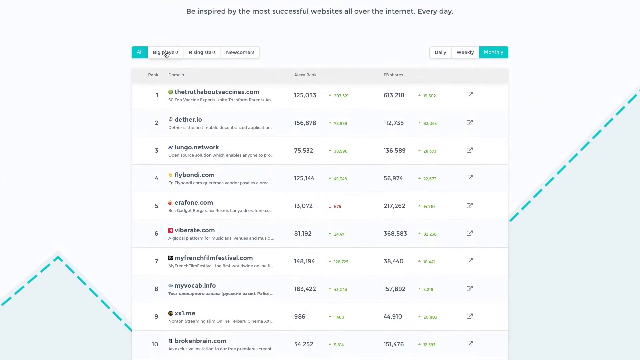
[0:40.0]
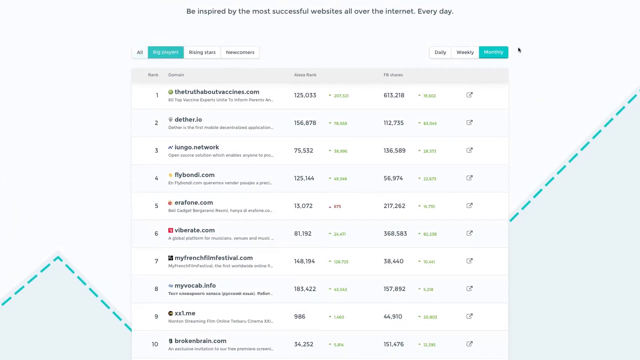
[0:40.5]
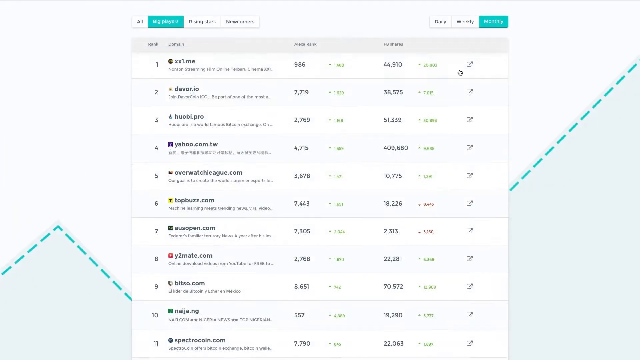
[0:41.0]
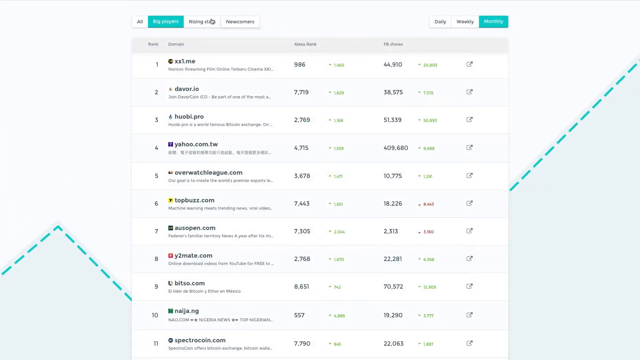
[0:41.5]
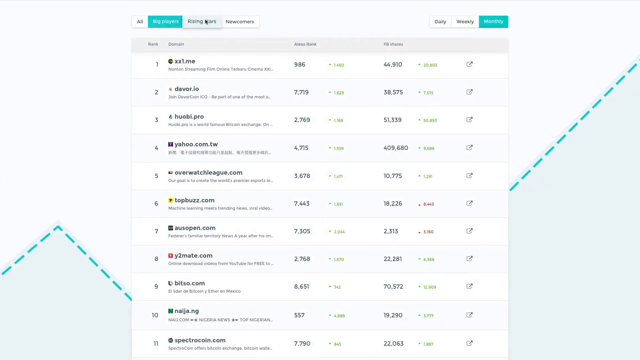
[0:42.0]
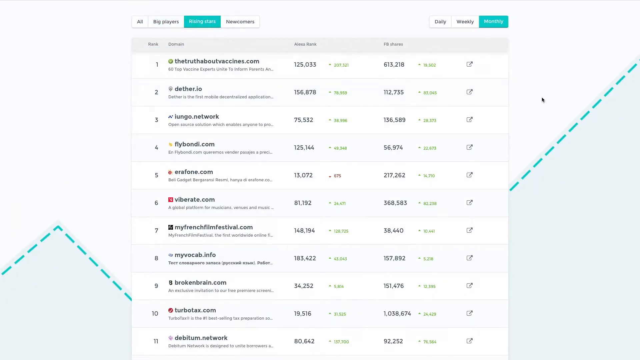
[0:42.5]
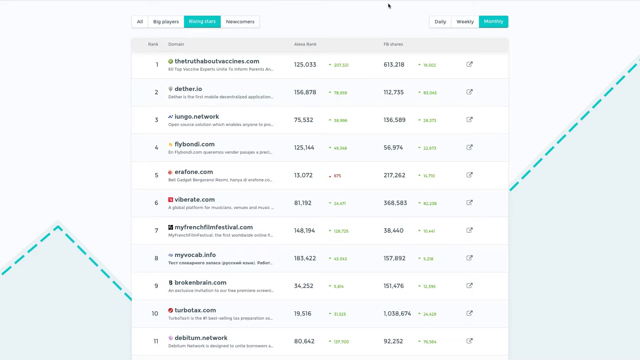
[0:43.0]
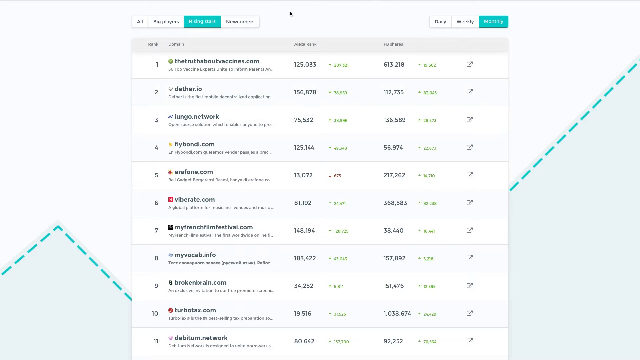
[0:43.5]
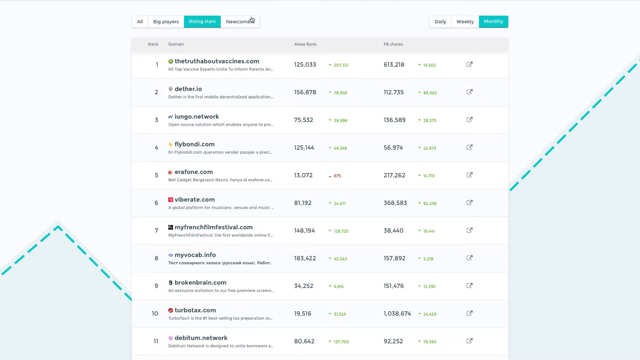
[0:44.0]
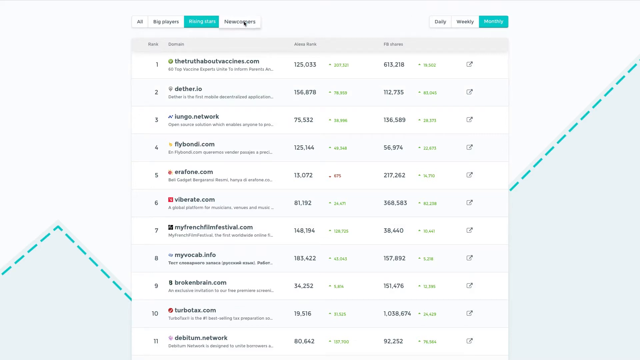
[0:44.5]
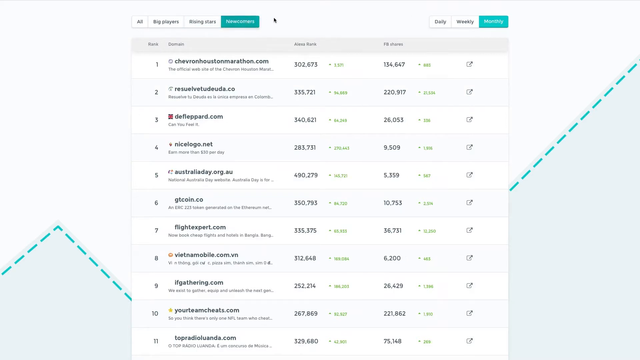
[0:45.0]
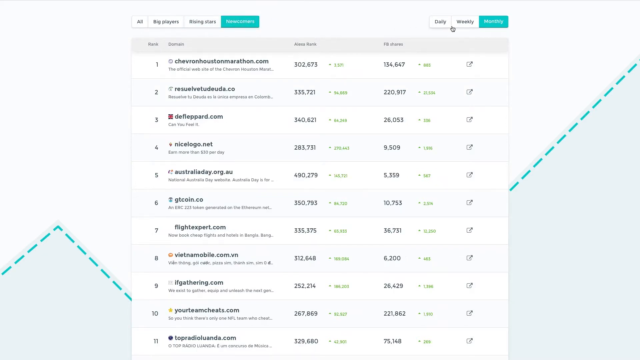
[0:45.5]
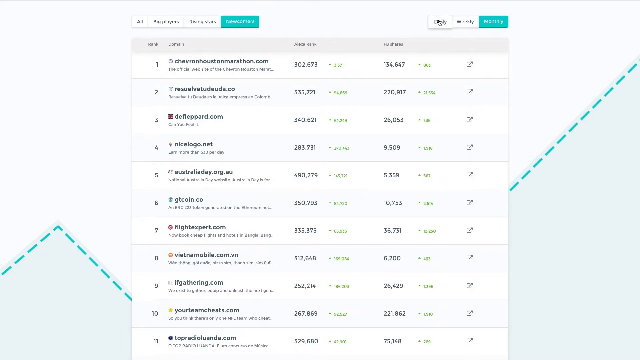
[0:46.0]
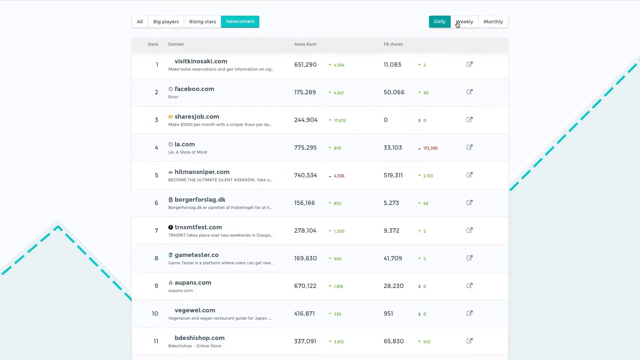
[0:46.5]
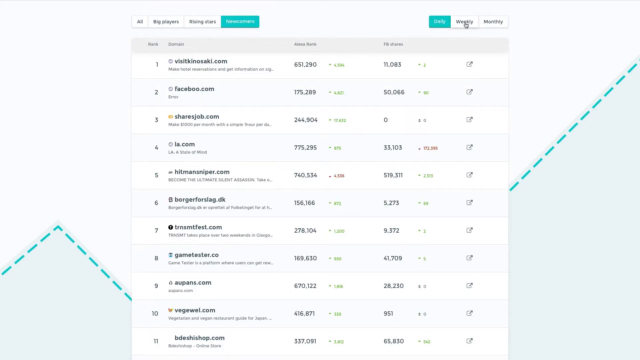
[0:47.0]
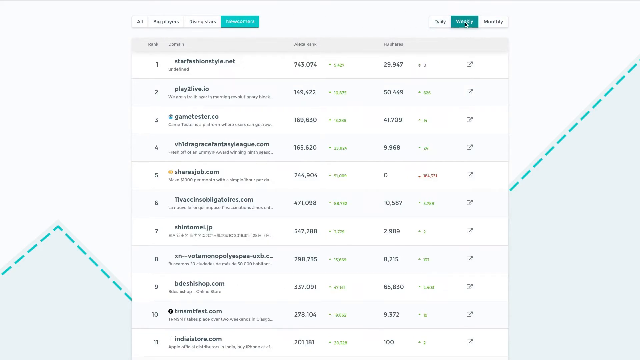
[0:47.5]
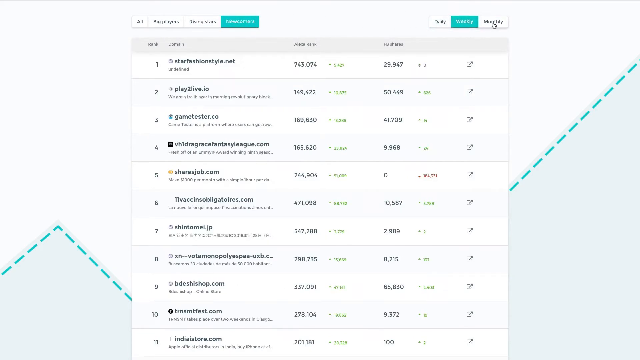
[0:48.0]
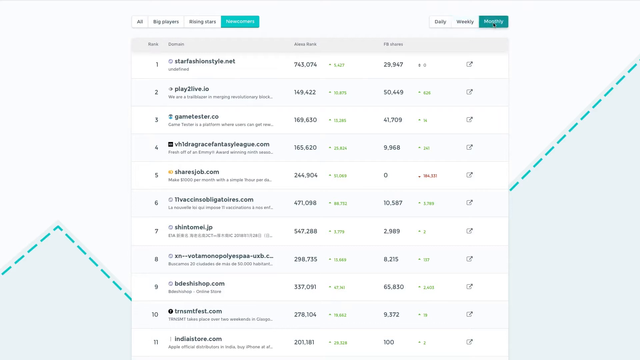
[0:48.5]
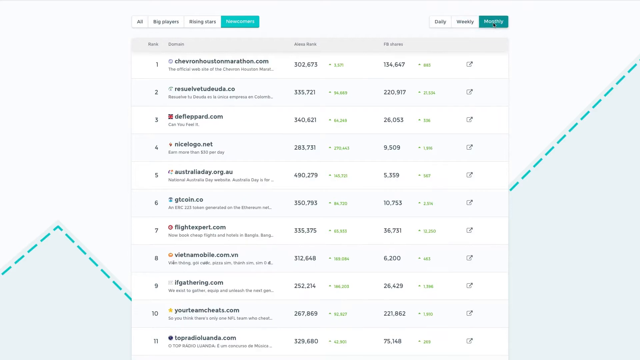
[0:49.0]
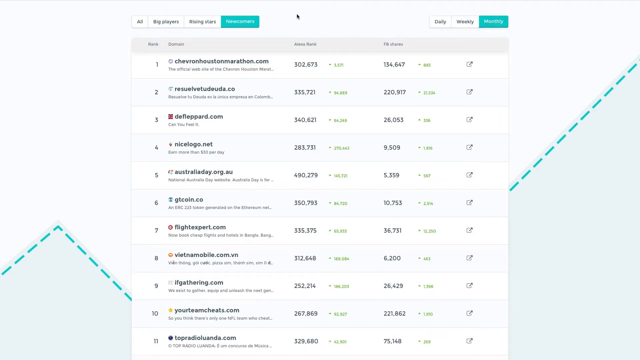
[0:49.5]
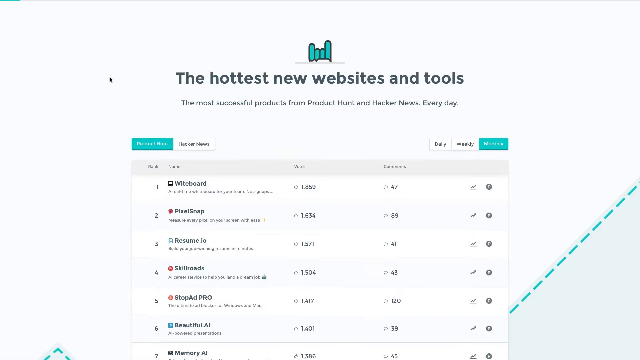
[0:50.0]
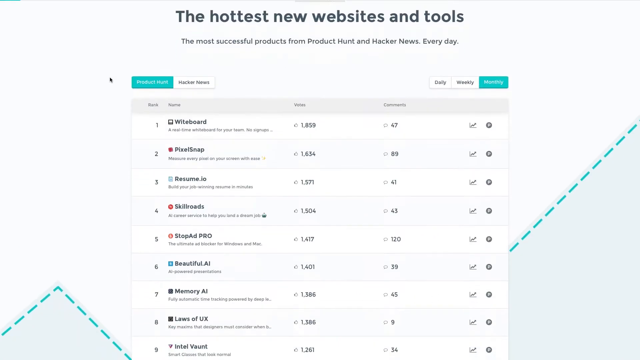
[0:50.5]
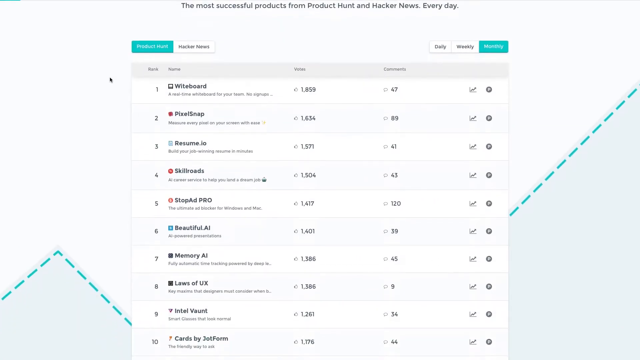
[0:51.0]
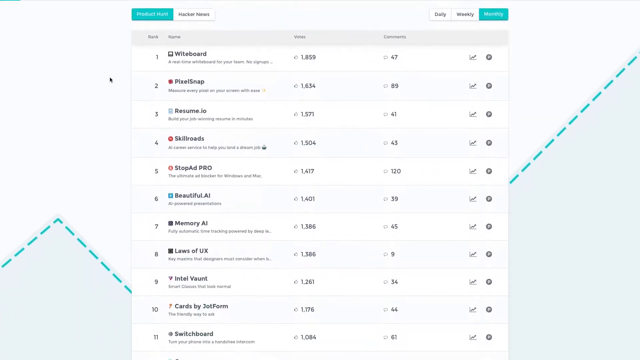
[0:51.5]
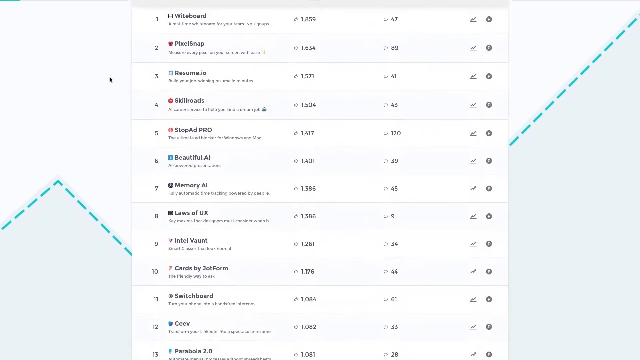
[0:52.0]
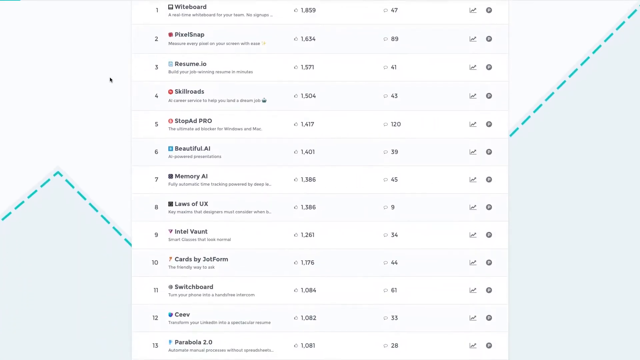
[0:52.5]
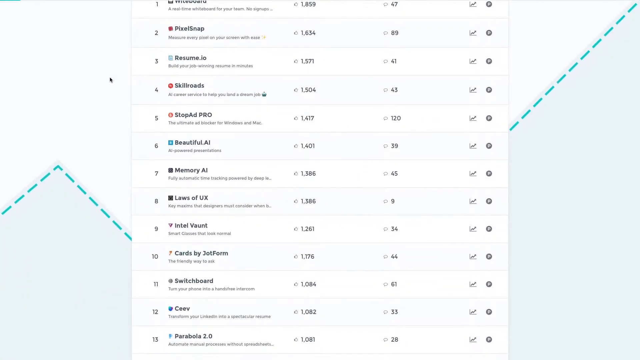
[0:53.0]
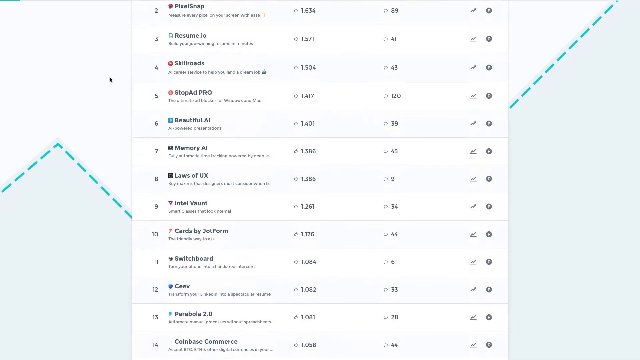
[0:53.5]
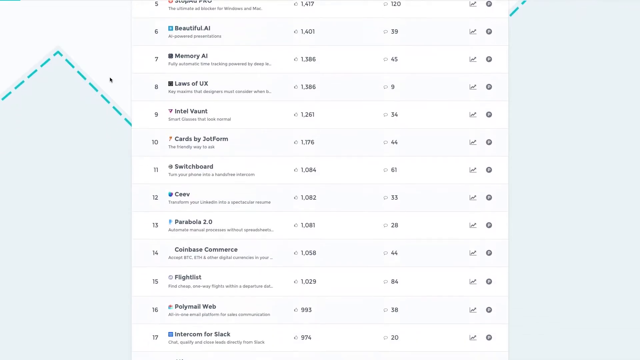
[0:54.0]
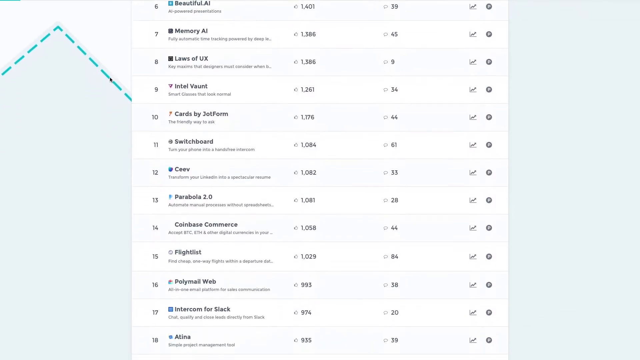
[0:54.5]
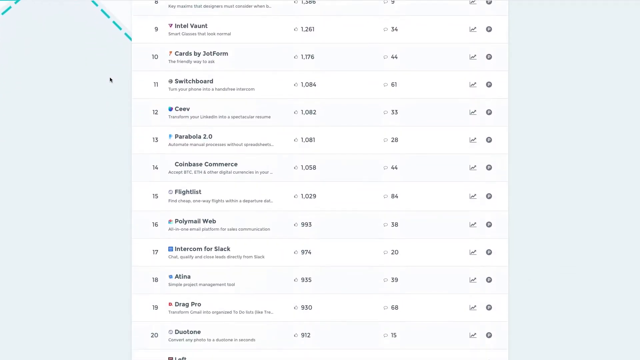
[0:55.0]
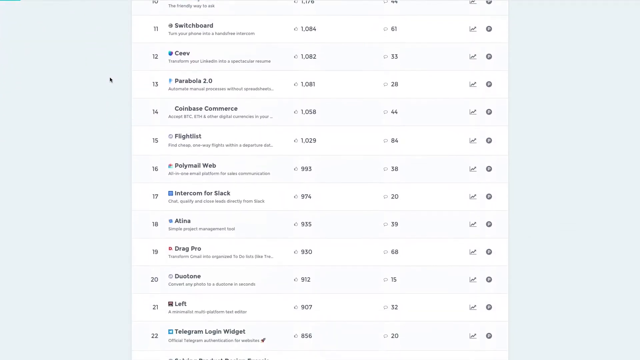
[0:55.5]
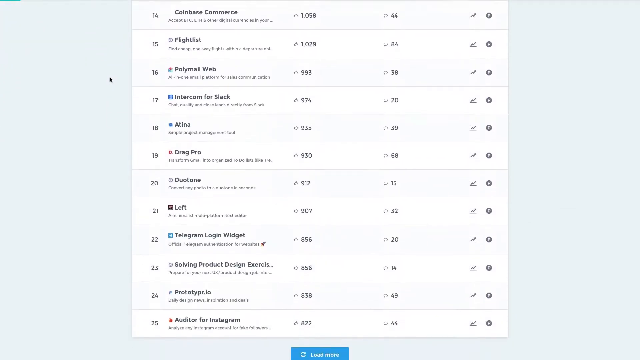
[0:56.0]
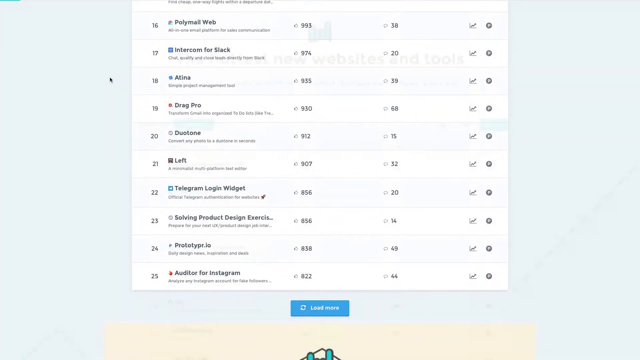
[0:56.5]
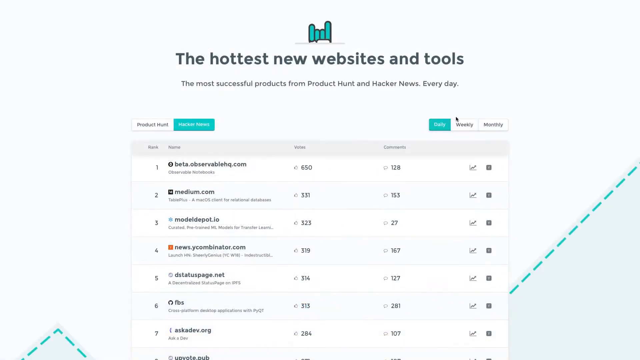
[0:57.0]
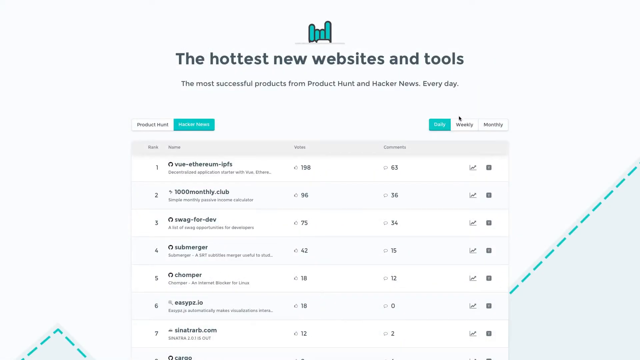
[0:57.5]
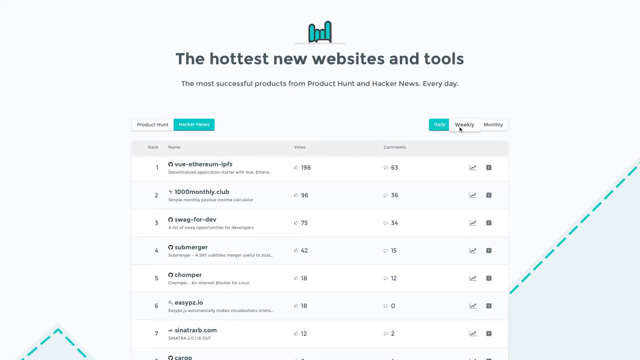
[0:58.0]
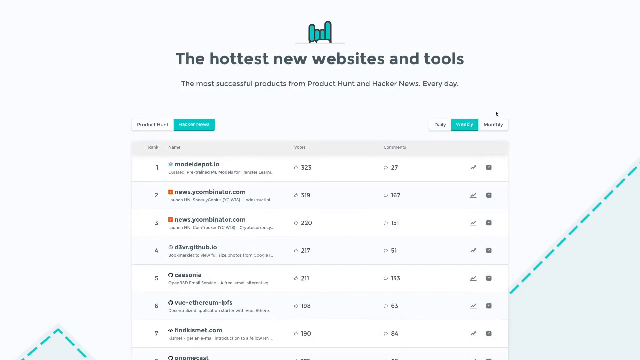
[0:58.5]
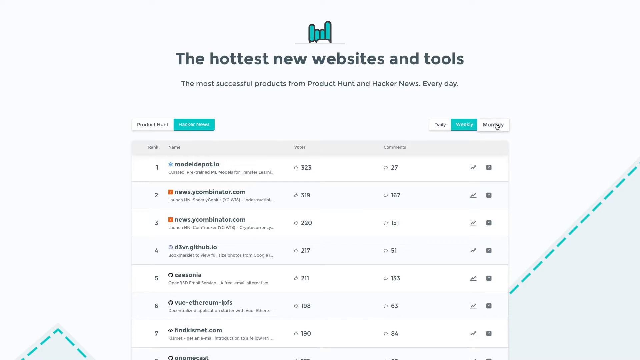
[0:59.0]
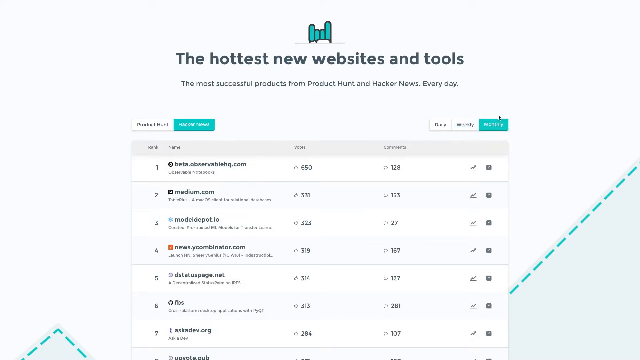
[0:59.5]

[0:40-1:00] The sleek site is shown with its categories, such as Big Players, Rising Stars and apparently Owners, though the text is hard to read. Each category shows different sites matching it. Sites are listed under monthly, daily and weekly tabs, with each site's users, traffic, ranking, link and a quick description. There are a great many ranked sites on the website. The design is very sleek, the transitions are very quick, and the format is very organized; the site seems to be updated very regularly. The site logo and the link to the site are clearly visible, along with how many users each site has gained or lost over the monthly, weekly or daily period and how the sites have risen in ranking.